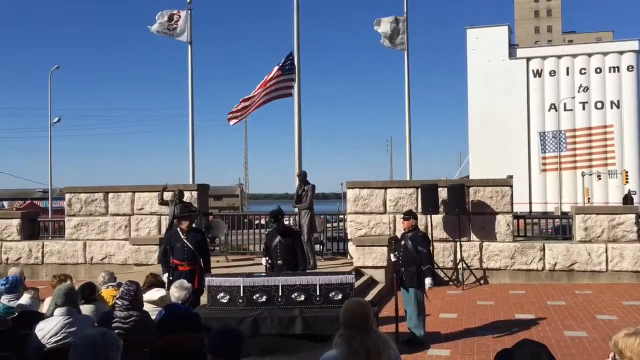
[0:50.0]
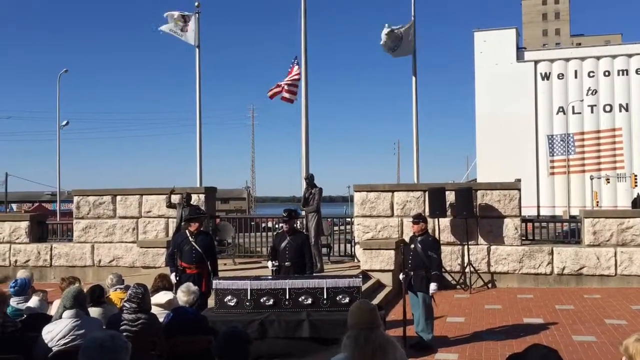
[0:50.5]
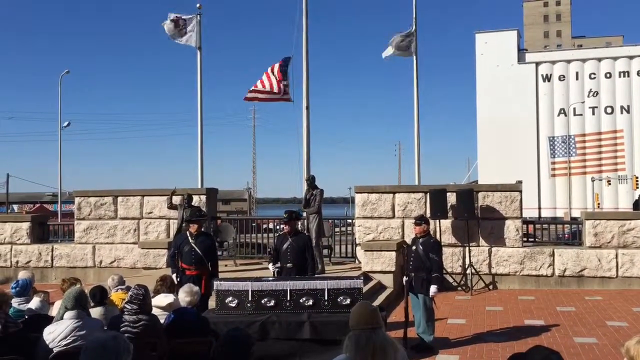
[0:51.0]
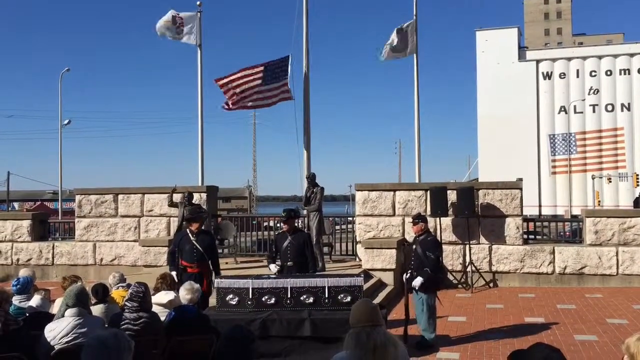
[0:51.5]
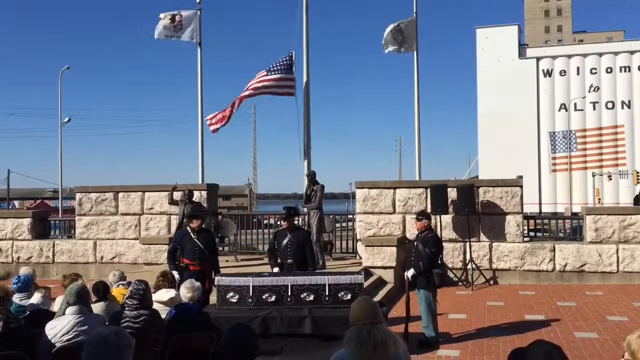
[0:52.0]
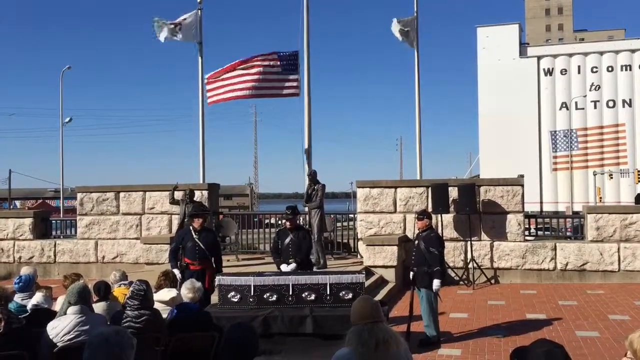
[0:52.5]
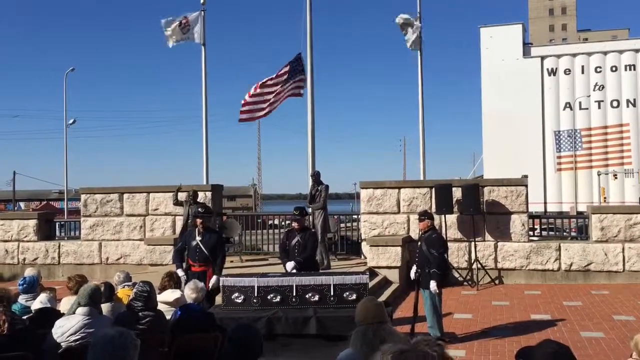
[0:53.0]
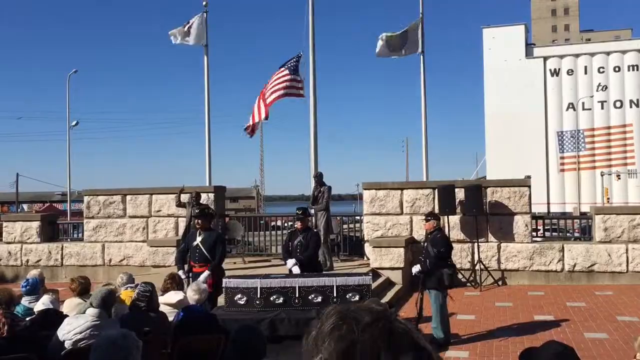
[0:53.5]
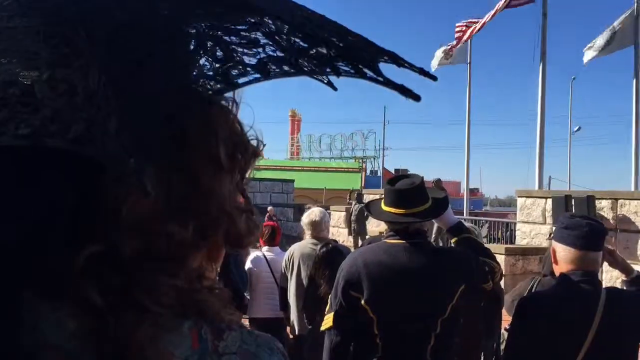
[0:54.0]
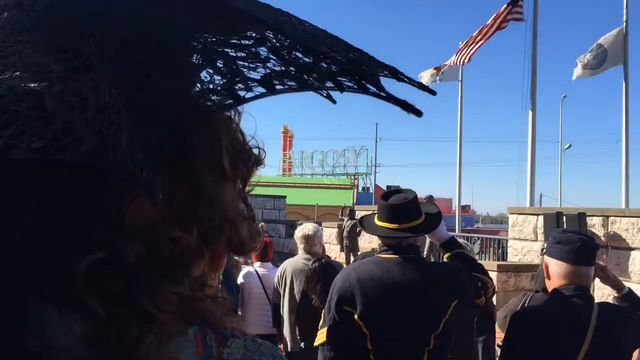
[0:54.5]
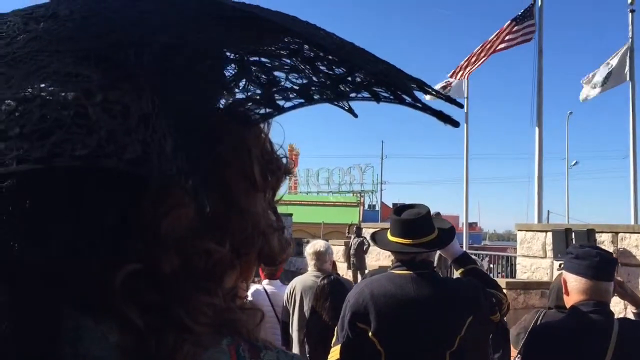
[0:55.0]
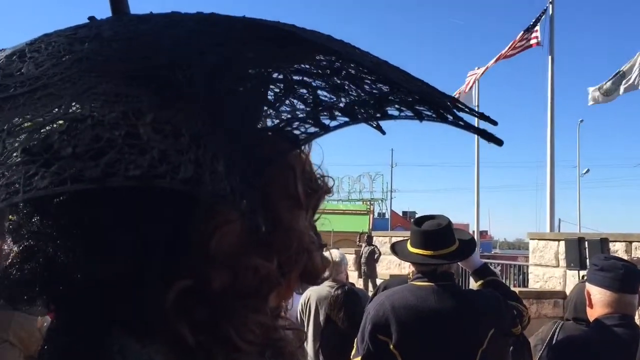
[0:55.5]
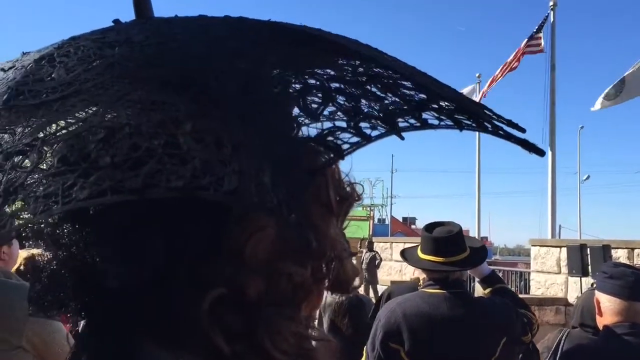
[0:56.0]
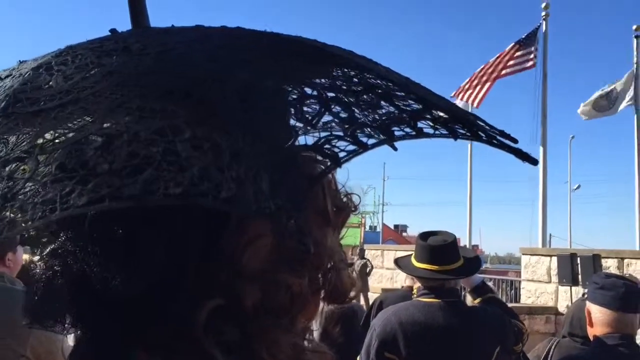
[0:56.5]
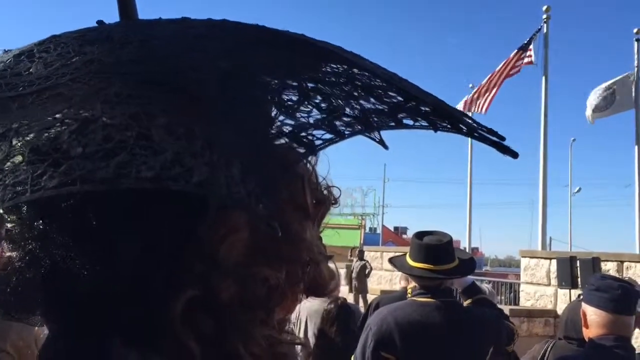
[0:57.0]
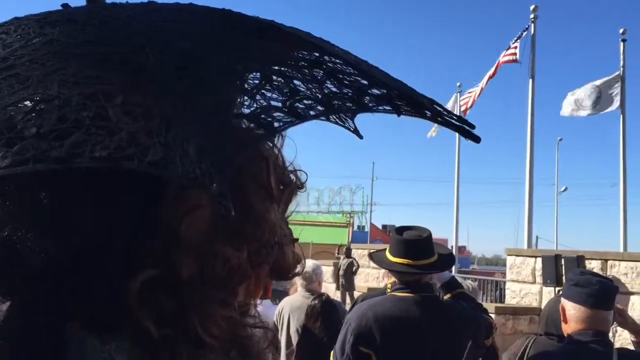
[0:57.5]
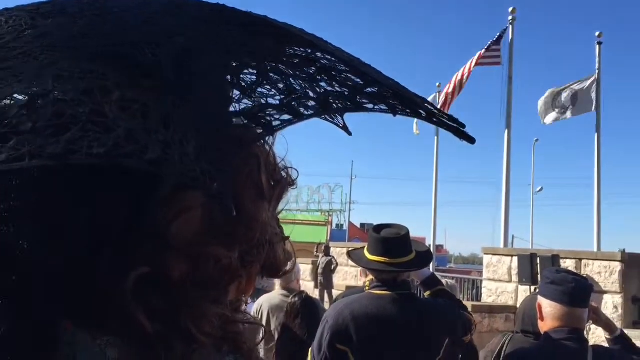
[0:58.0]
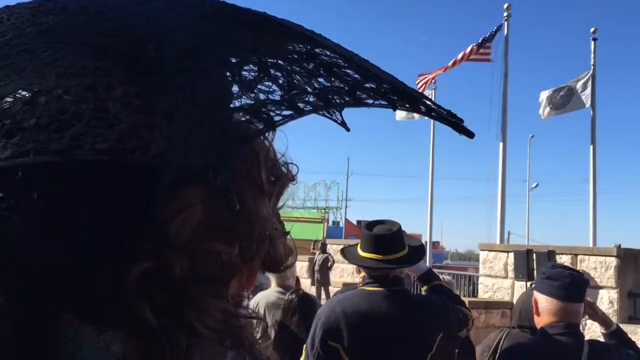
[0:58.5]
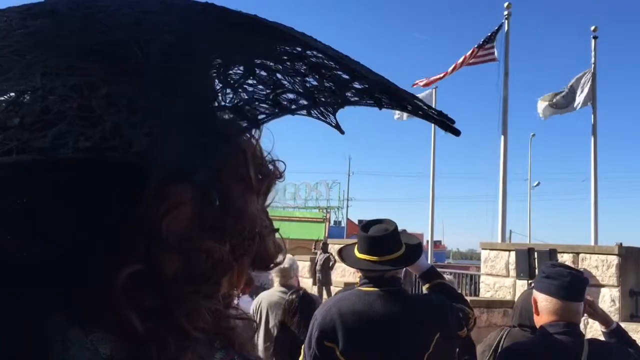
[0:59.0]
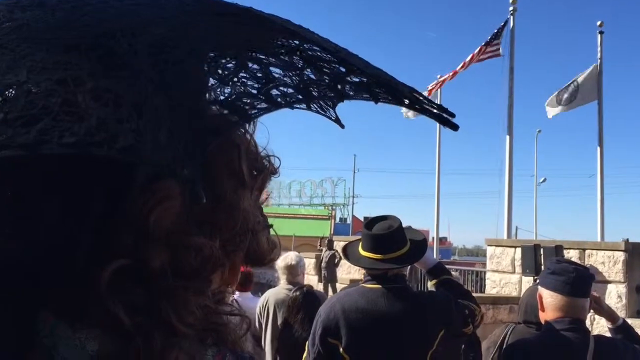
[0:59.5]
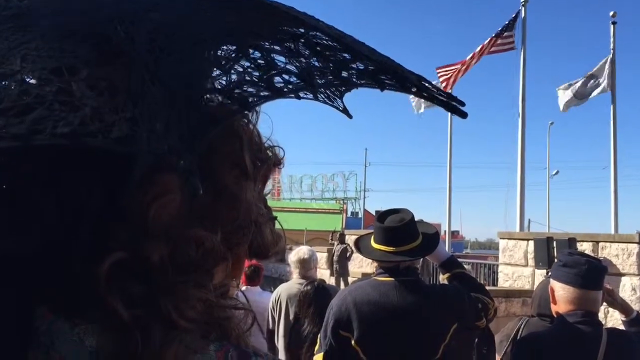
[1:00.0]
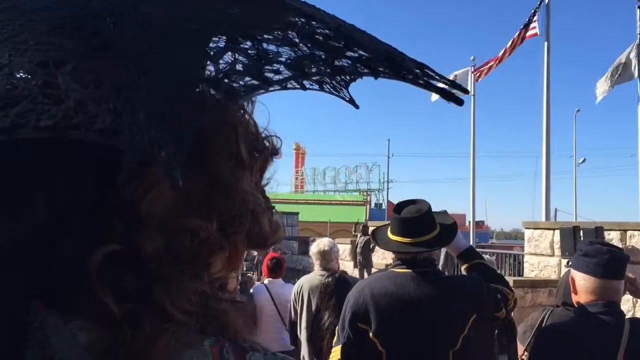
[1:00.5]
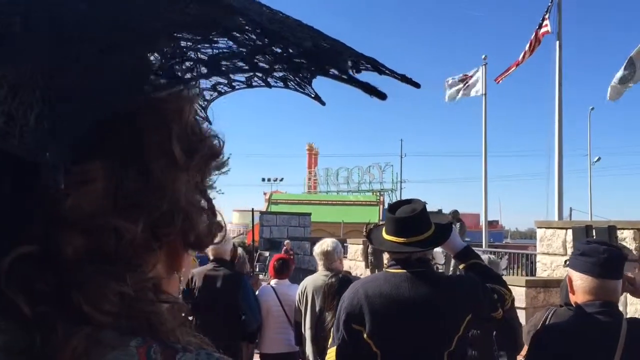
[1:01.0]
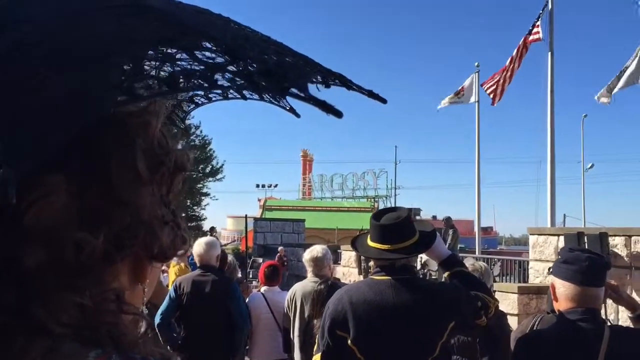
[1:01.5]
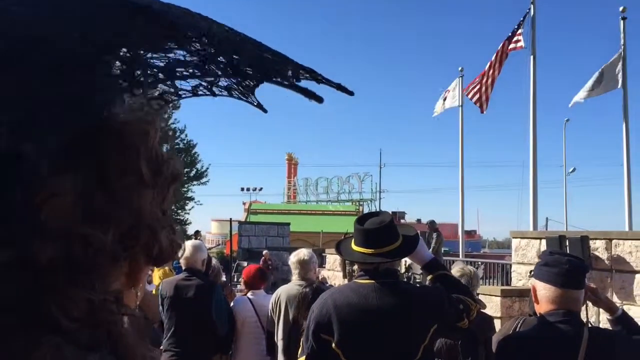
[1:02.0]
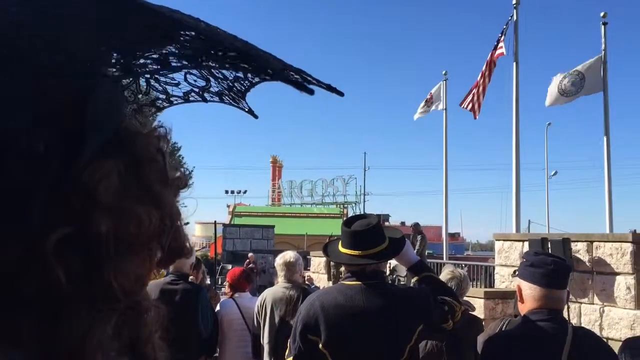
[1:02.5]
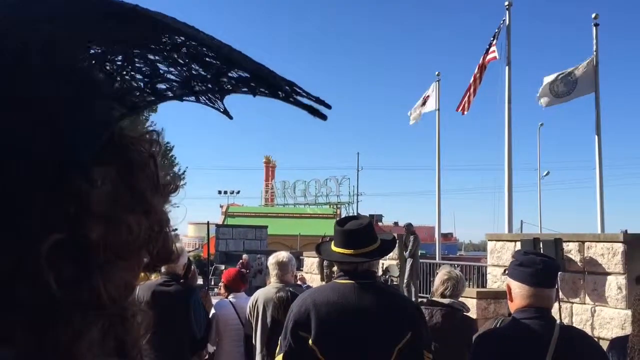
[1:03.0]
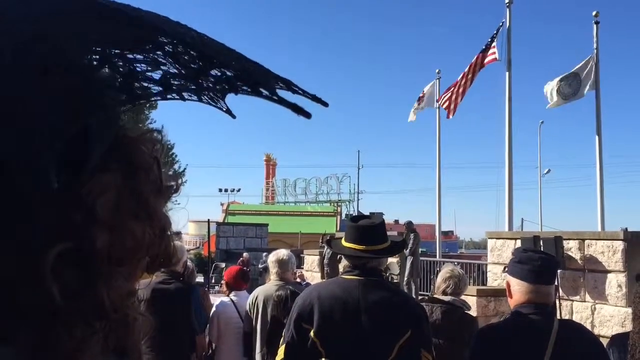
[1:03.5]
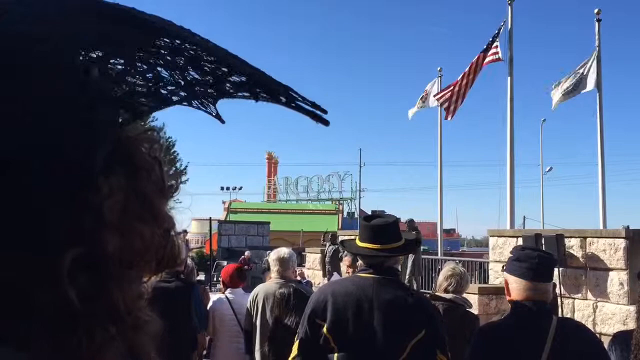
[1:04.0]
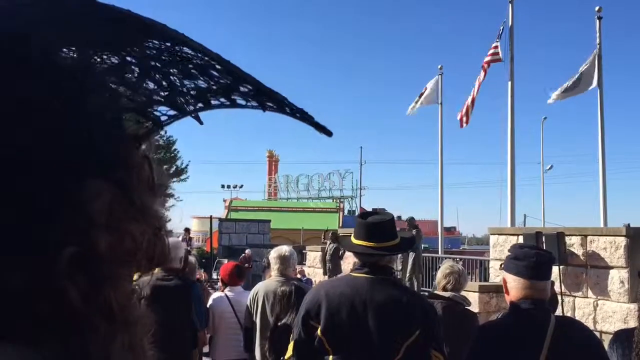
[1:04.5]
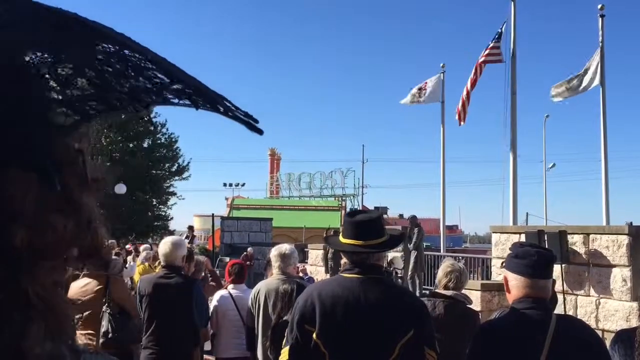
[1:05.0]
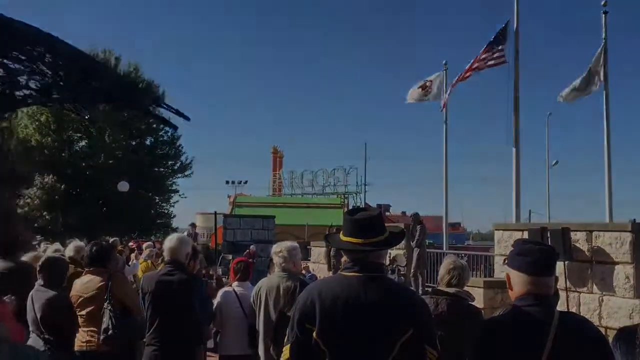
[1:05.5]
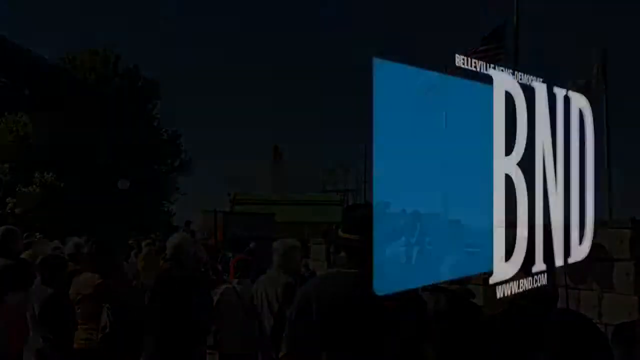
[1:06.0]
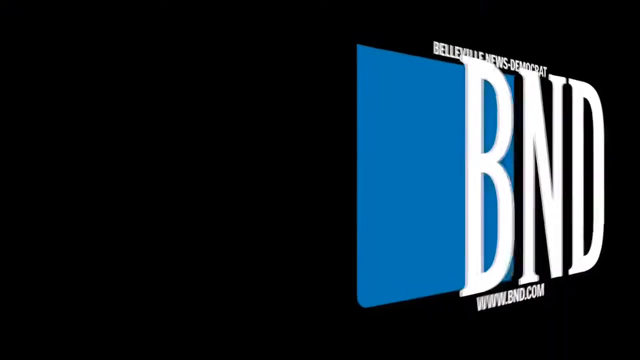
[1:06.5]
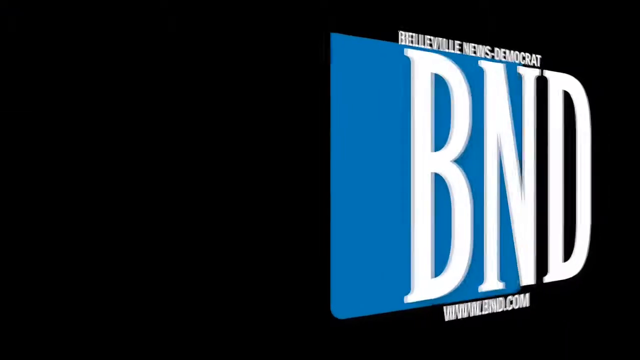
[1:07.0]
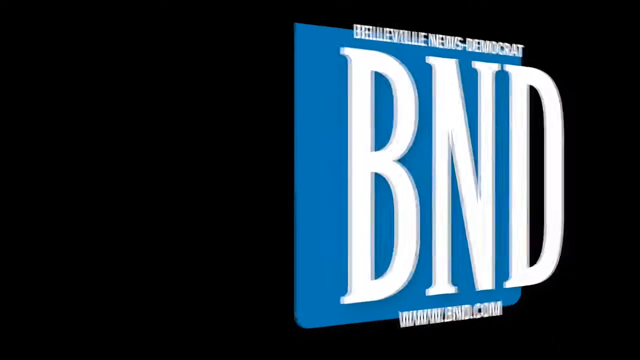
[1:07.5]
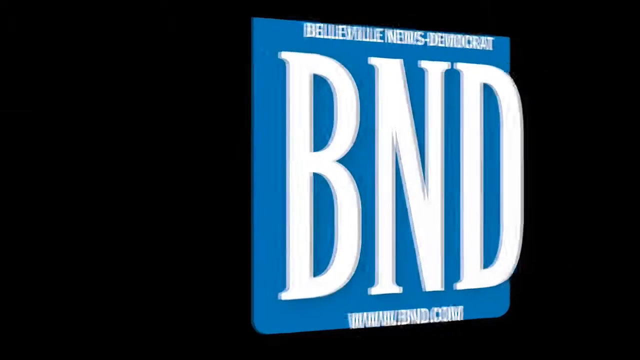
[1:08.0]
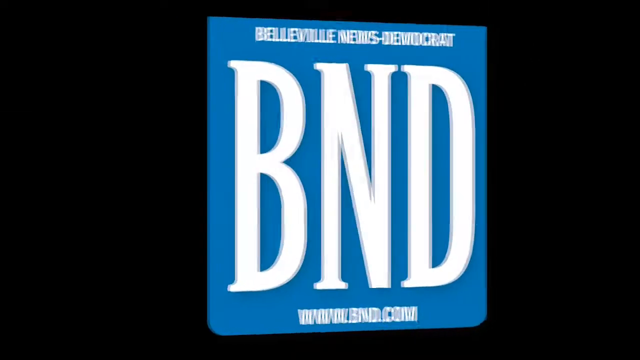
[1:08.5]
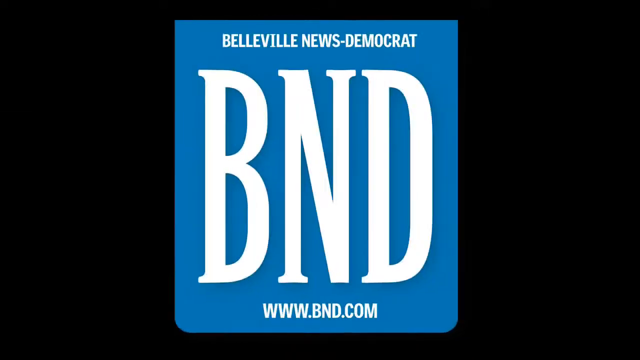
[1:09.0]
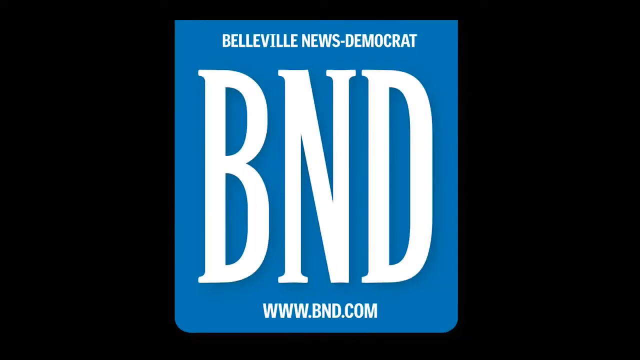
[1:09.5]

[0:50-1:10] People are gathered in an outdoor plaza or courtyard. Three men wearing Civil War-era Union uniforms stand around what appears to be a black coffin with what looks like white fringe or some sort of white decoration around the top. Behind them is a monument of two statues: one of a man standing with his hand raised in the air as if speaking to a crowd, and the other of a man standing in the back, resting his head on his hand and looking down. Behind the statues are three flagpoles. The two outer flags are white with designs in the center, and on the center flagpole is an American flag that appears to be at half staff. On the right side of the screen is a large building with a white side, on which an American flag is painted with the words "Welcome to Alton" above it. The scene then switches to a view from inside the crowd, looking over the shoulder of a woman holding a black lace umbrella over her head, as the men in uniform salute. The image then fades, and an end card appears that reads "Belleville News-Democrat BND www.bnd.com".